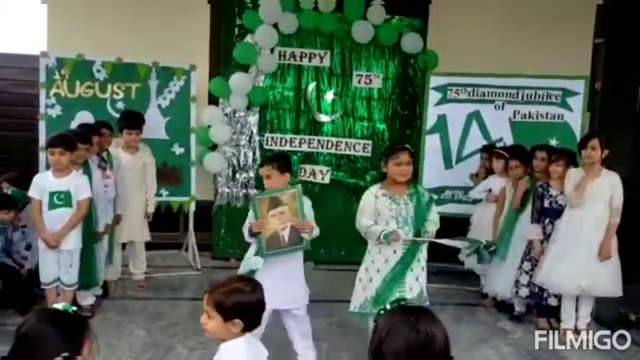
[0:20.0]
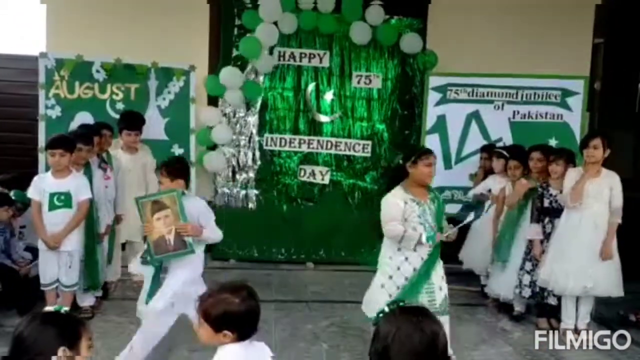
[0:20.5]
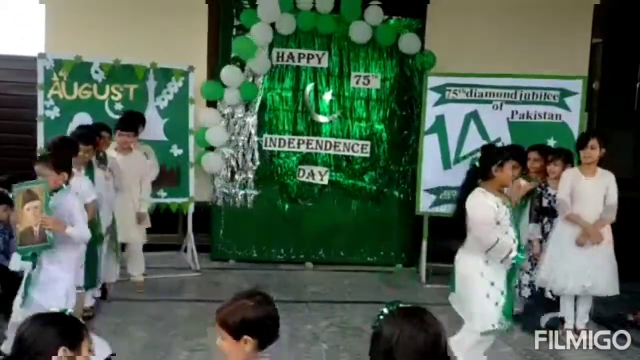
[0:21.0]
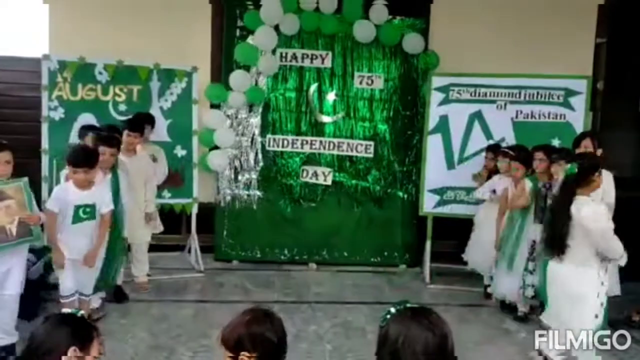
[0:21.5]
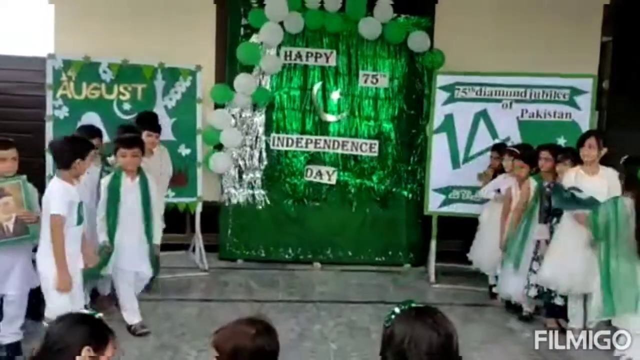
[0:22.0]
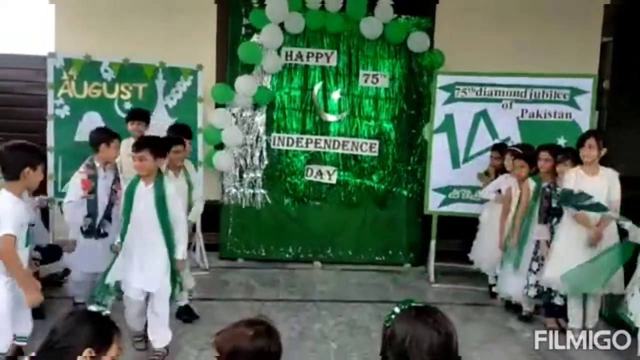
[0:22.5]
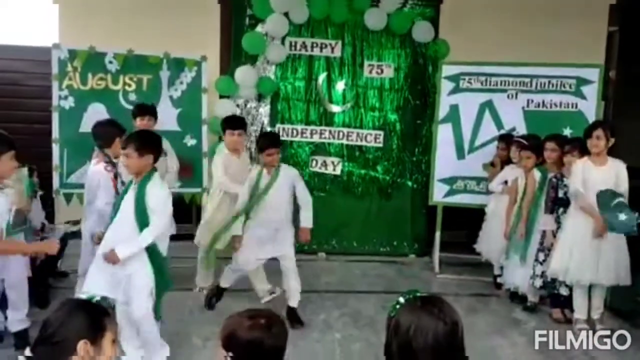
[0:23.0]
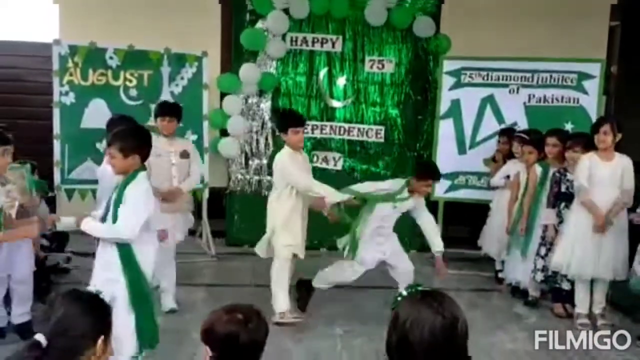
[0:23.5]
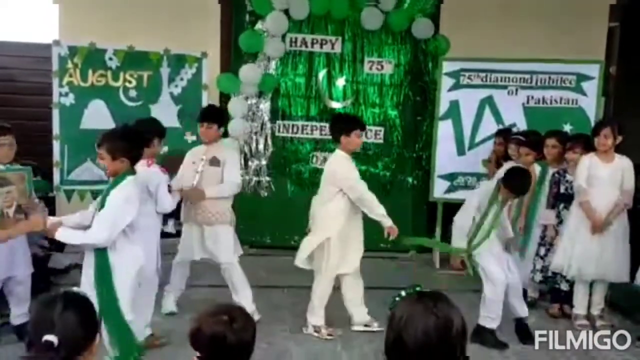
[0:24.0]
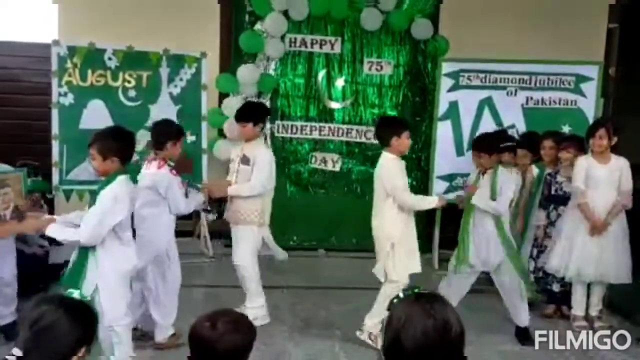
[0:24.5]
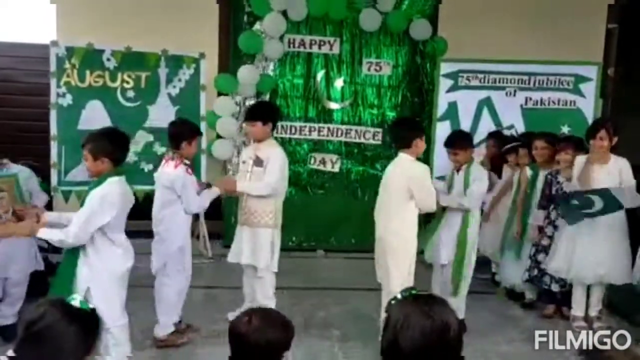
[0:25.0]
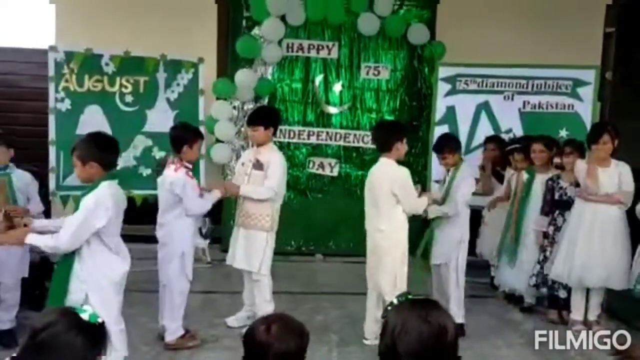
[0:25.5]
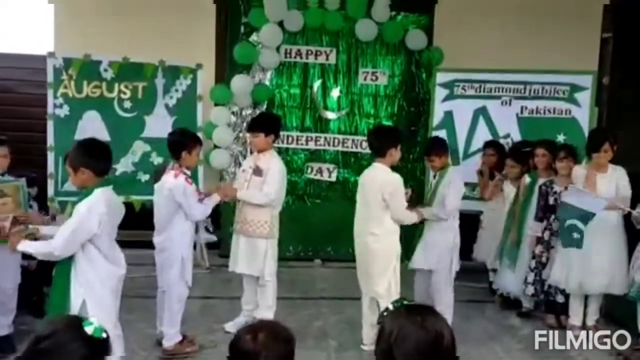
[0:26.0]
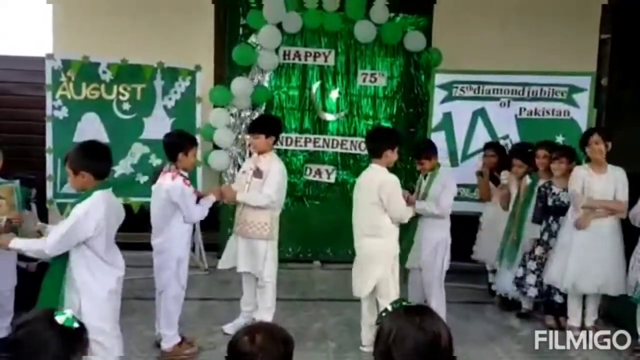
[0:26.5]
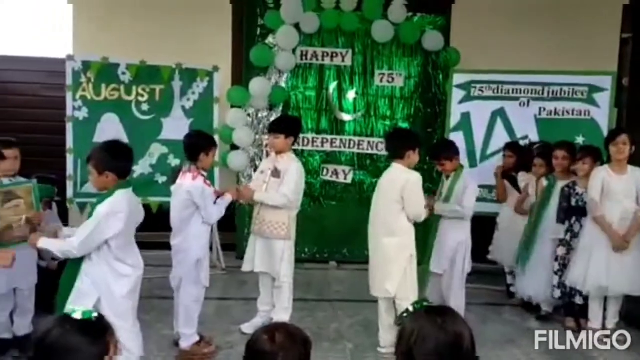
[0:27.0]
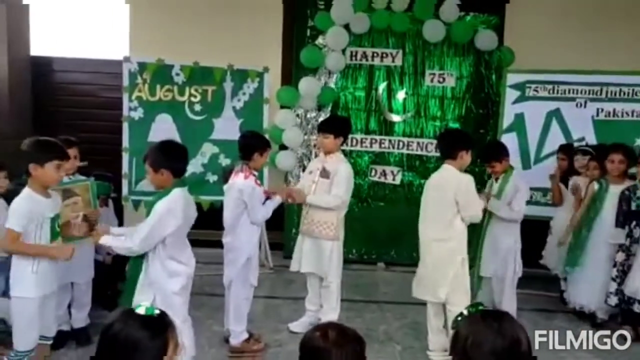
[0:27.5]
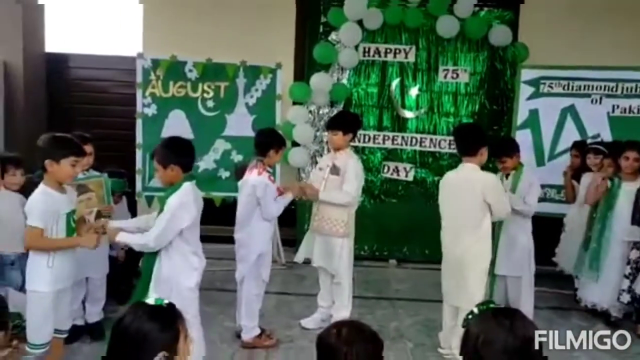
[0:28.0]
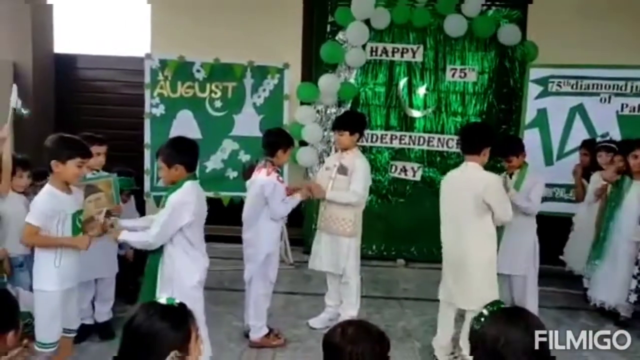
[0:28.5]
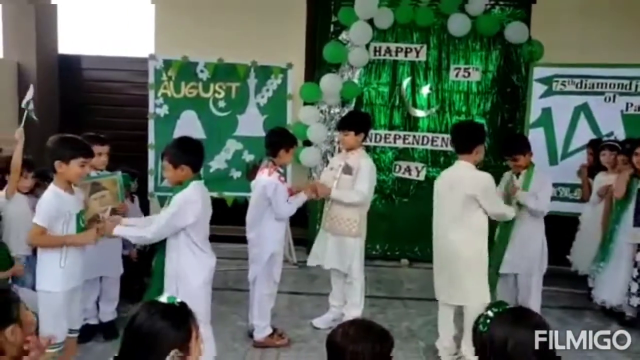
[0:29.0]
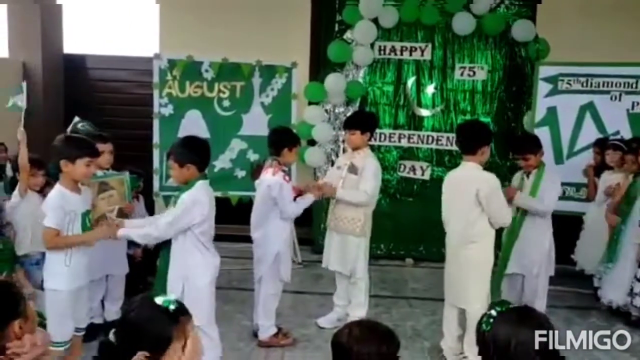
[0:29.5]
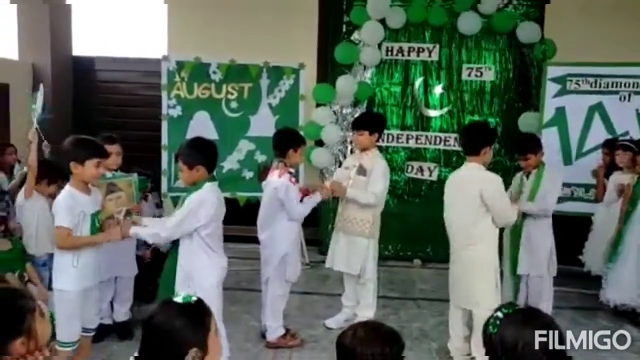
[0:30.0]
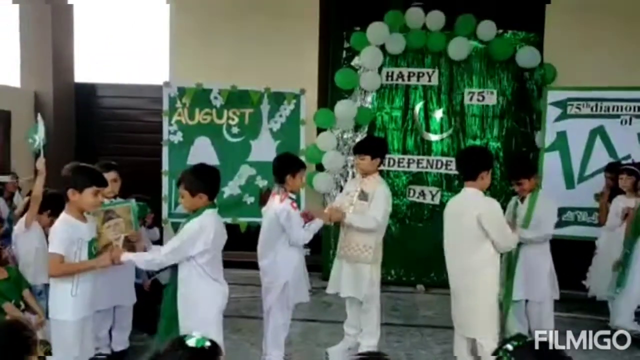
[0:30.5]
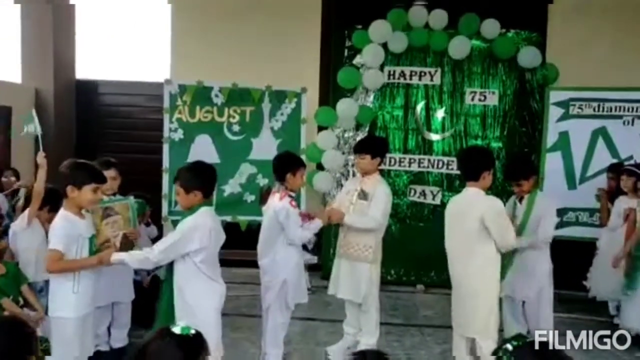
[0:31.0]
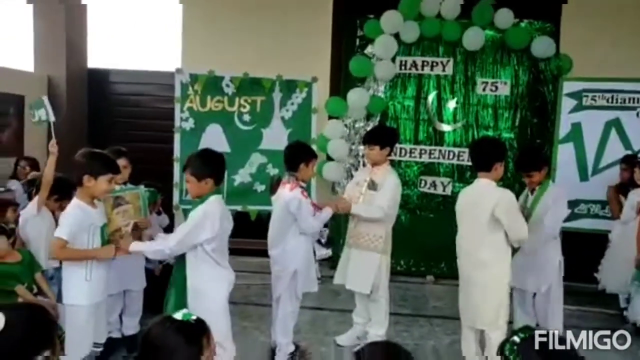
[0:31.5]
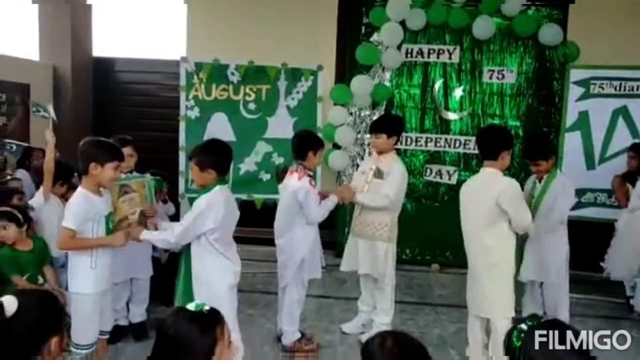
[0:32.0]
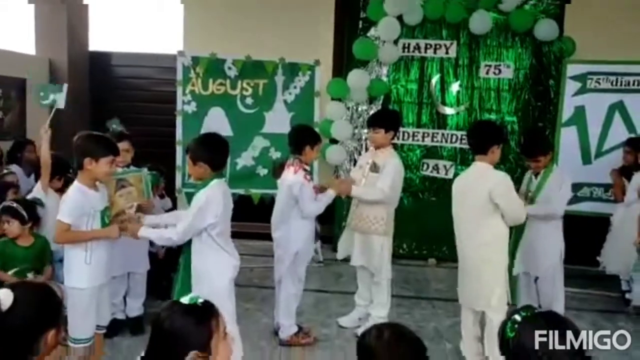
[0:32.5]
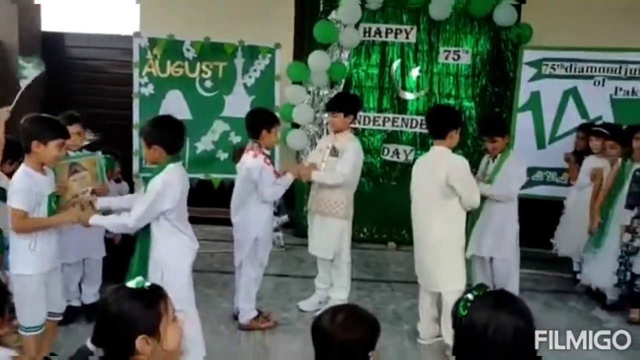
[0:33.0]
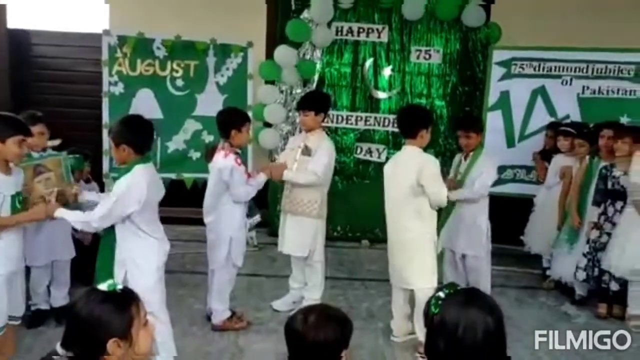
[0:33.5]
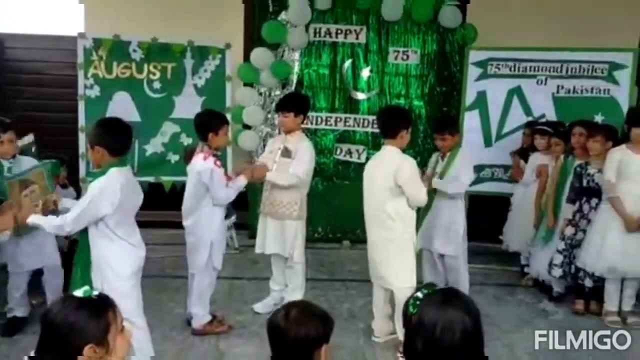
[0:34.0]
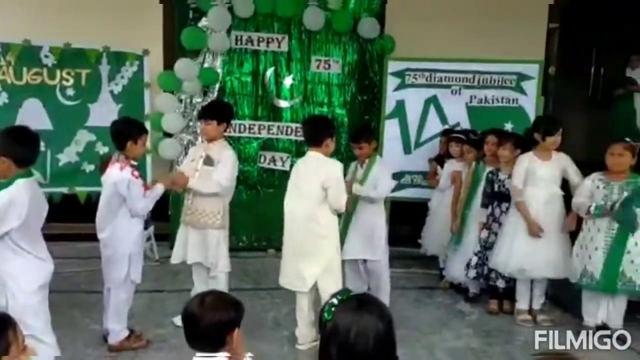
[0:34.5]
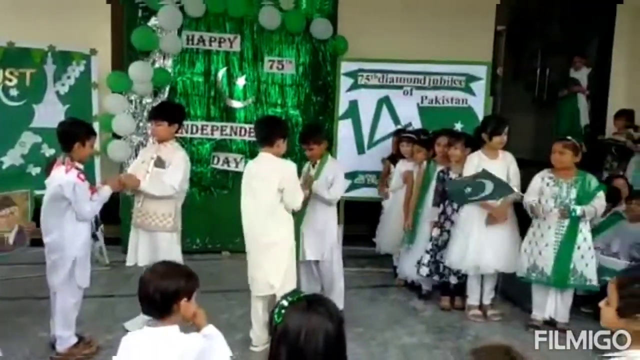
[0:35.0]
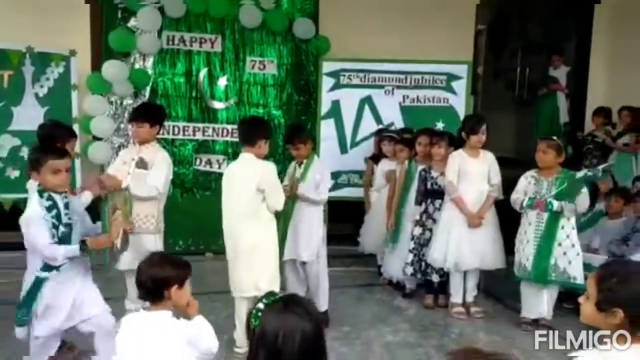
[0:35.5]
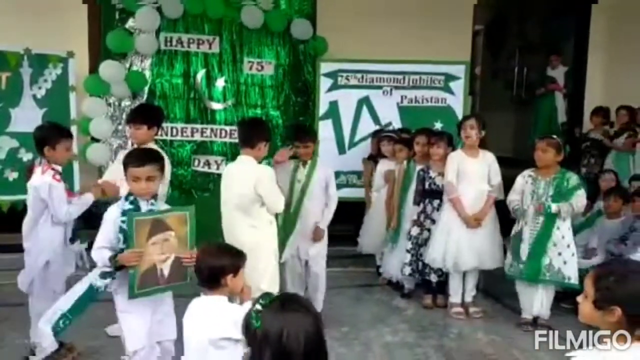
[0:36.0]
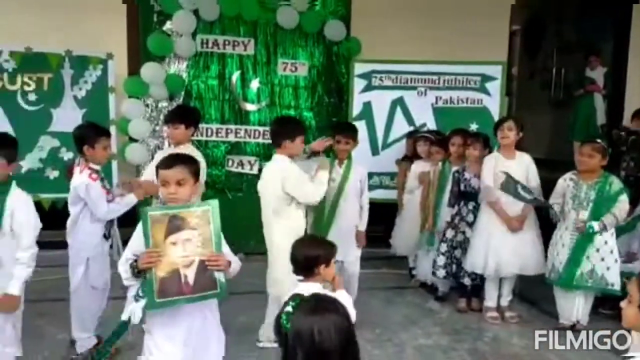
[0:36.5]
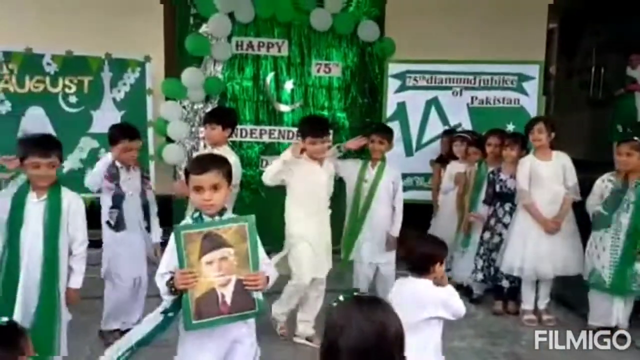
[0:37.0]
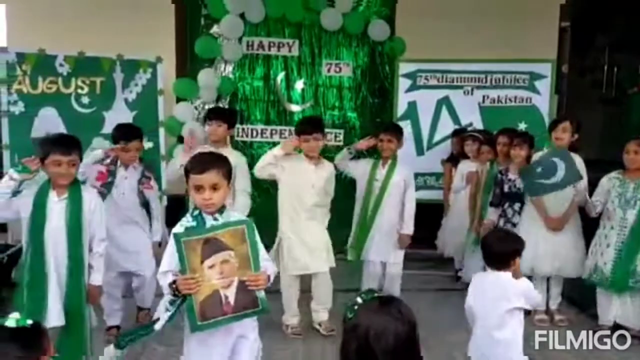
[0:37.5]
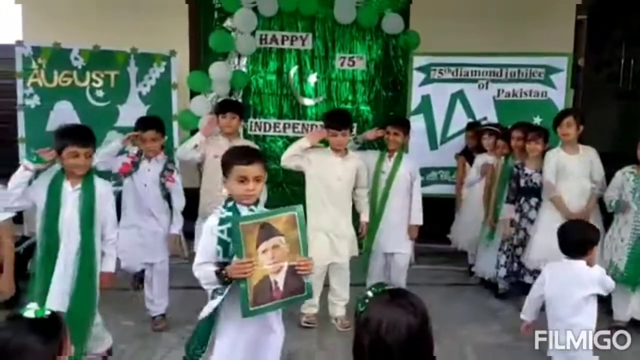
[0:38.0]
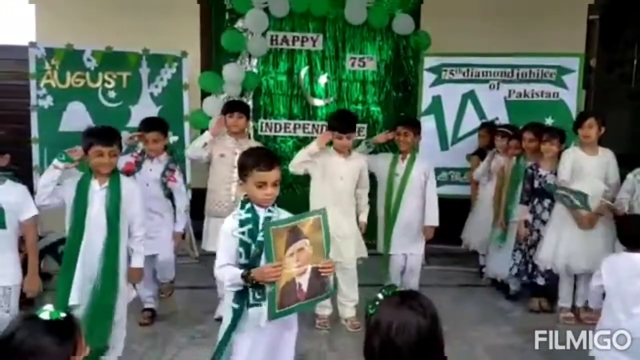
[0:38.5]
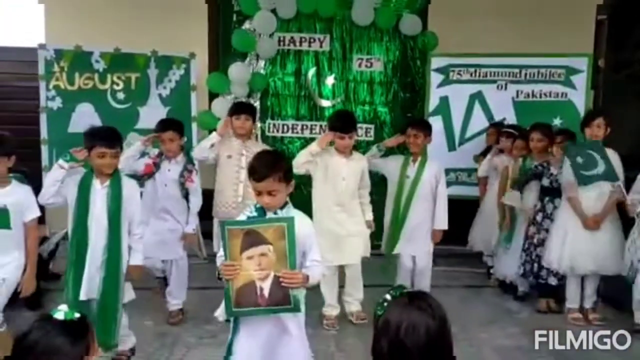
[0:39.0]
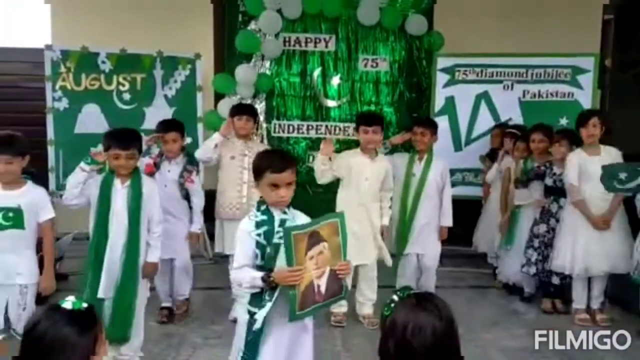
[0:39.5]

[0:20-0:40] The frontmost girl and boy have gone off screen, and the row of boys has kind of dispersed. The boys appear to play something similar to patty cake, kind of bumping their fists together, and generally move around. Afterward the boy with the picture of the person comes back, still kind of moving the picture around; the picture's frame is green, similar to the green in the kids' clothes. In the row of boys, the frontmost one wears a white t-shirt with a small Pakistani flag. The one behind him wears kind of a white long-sleeved dress shirt with a green sash. The next one wears a white shirt with red and green decorations, and the one behind him wears kind of an off-white vest on top of his shirt.